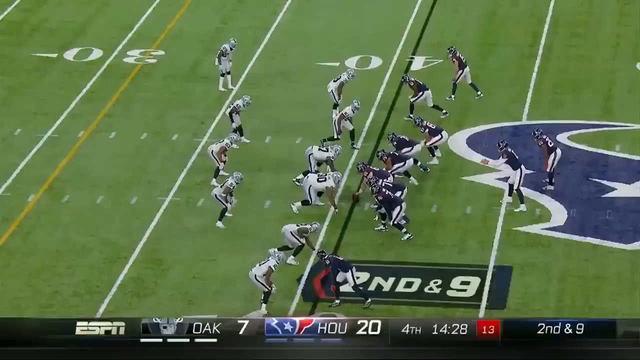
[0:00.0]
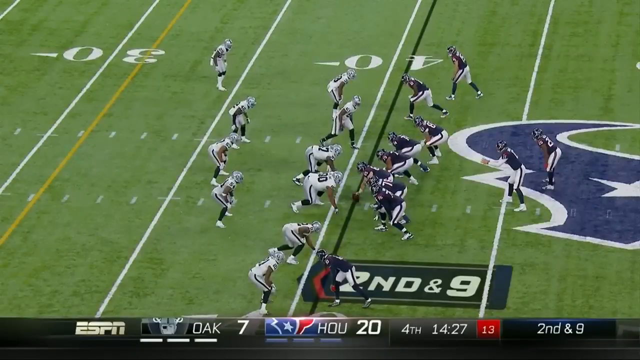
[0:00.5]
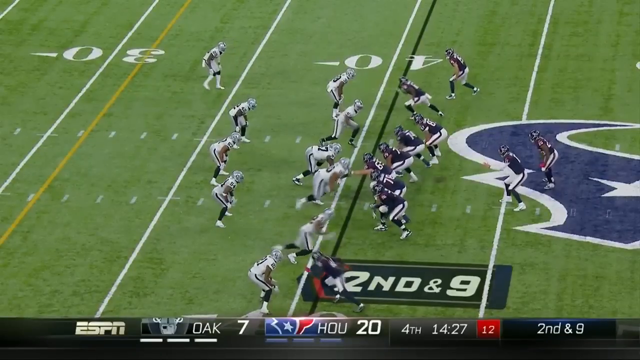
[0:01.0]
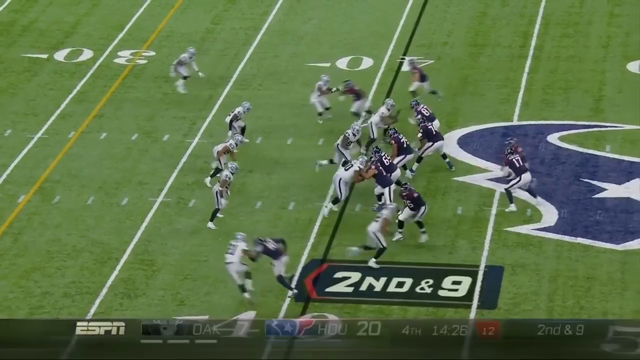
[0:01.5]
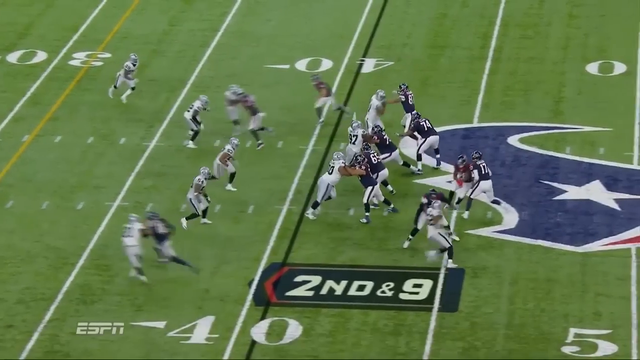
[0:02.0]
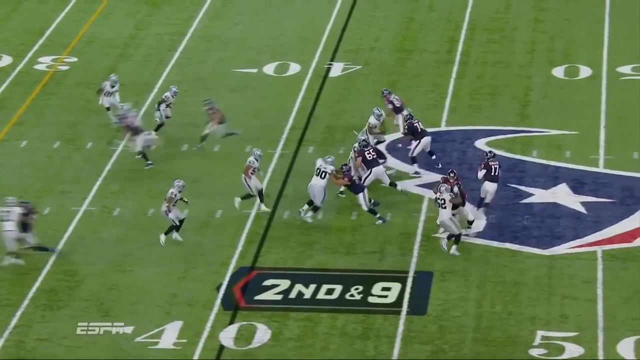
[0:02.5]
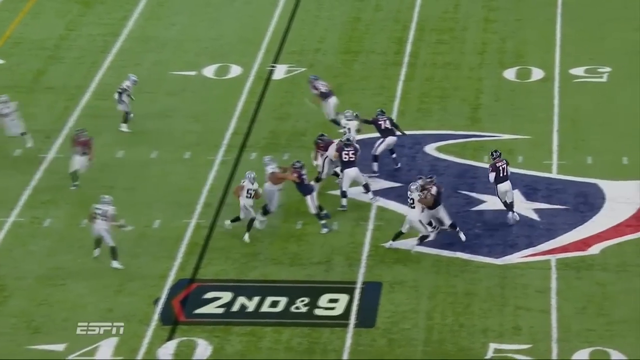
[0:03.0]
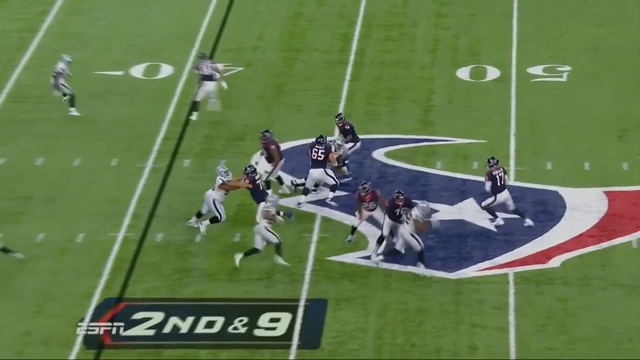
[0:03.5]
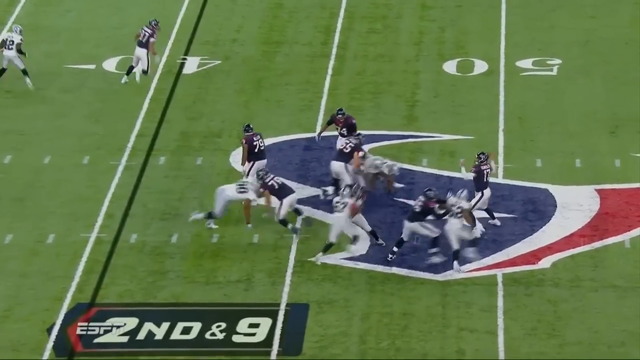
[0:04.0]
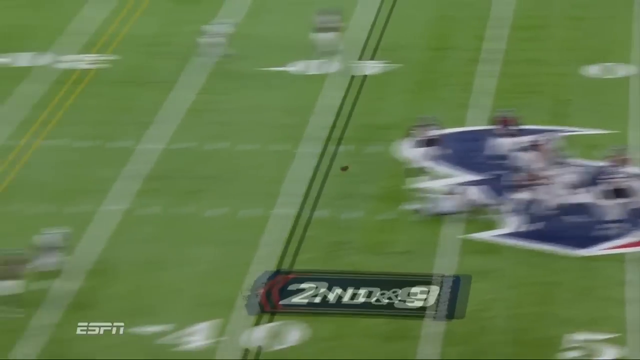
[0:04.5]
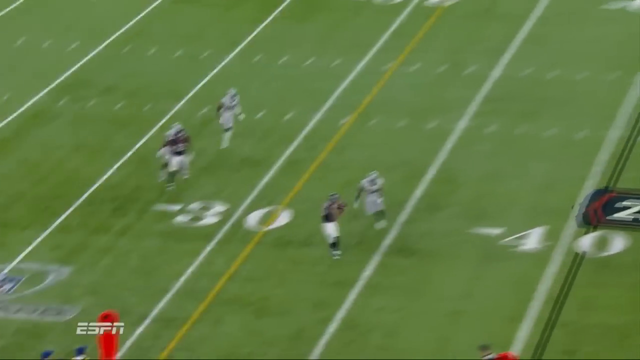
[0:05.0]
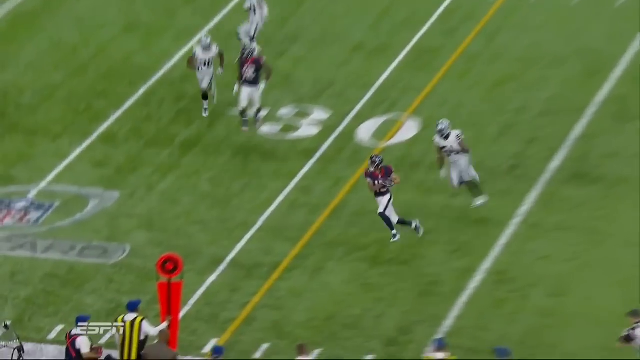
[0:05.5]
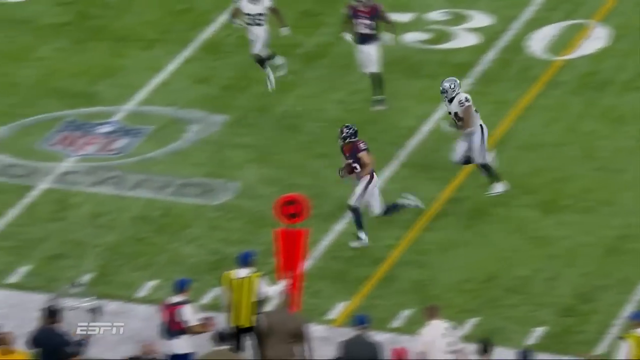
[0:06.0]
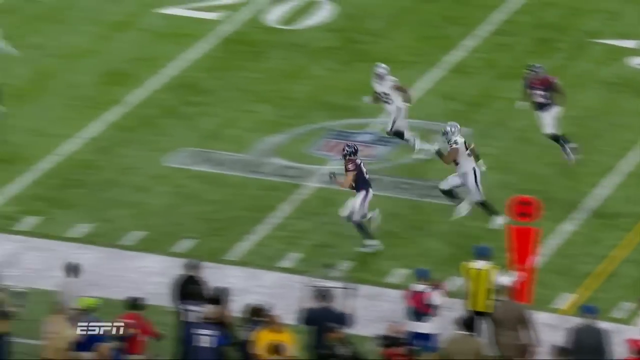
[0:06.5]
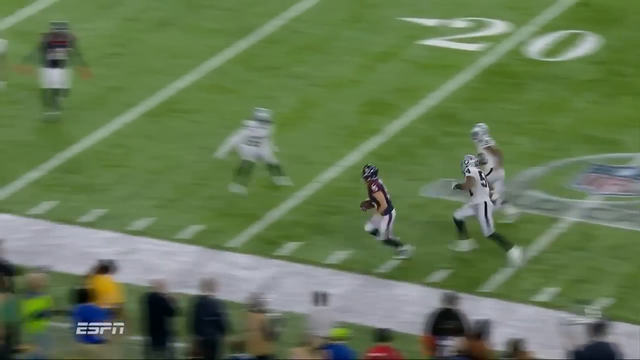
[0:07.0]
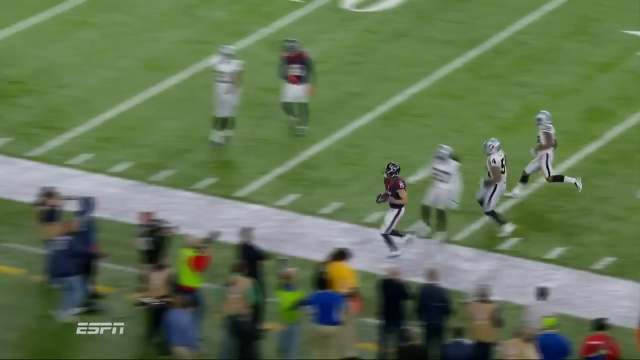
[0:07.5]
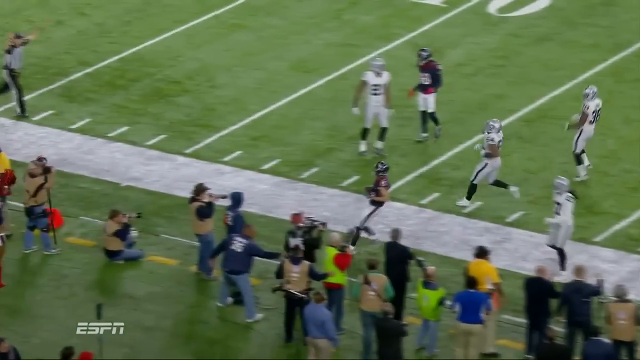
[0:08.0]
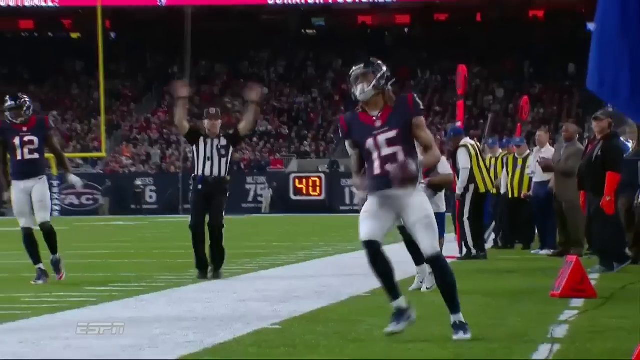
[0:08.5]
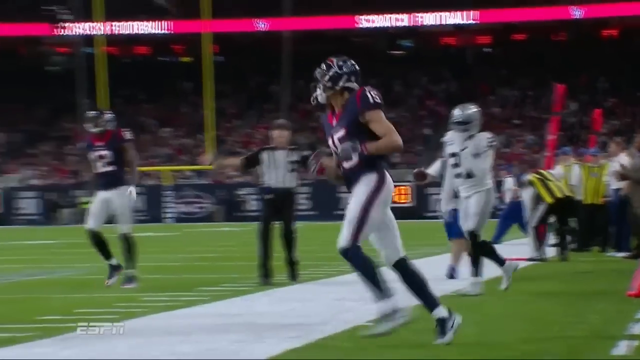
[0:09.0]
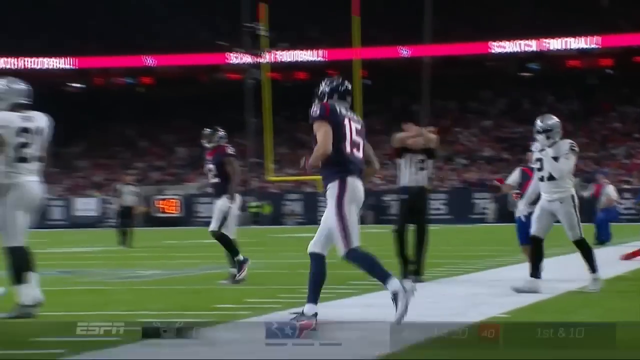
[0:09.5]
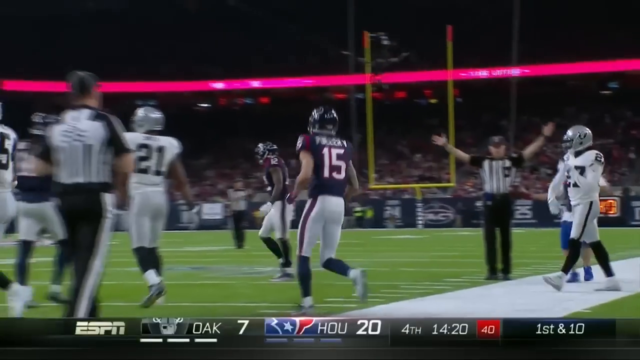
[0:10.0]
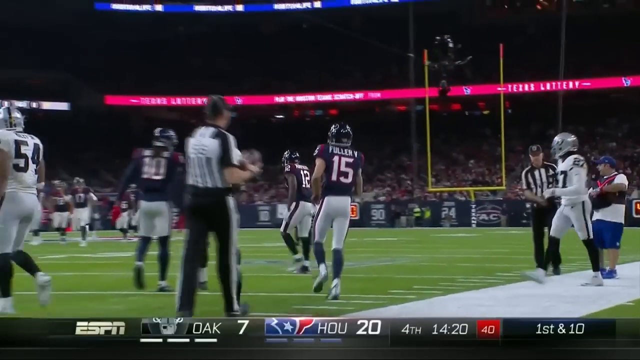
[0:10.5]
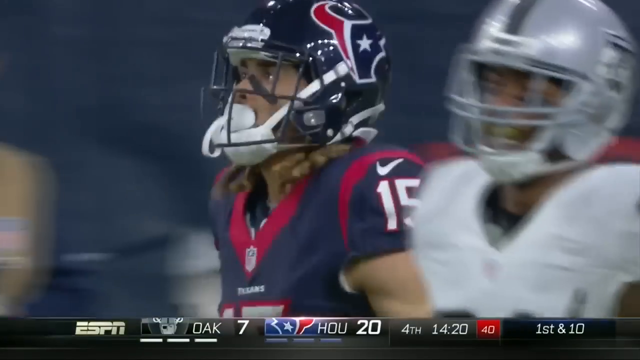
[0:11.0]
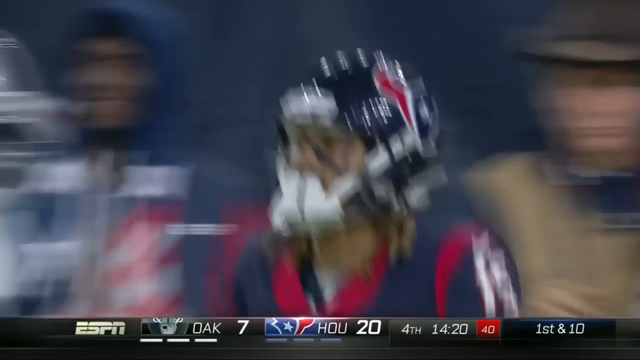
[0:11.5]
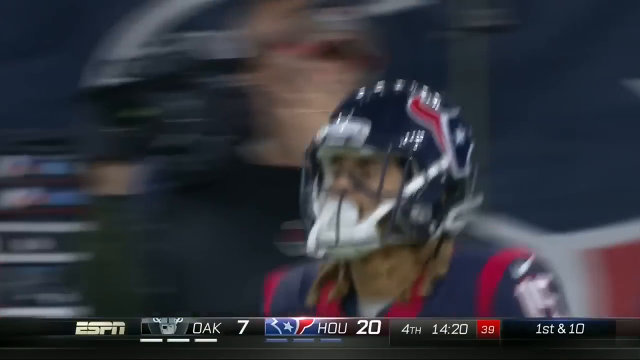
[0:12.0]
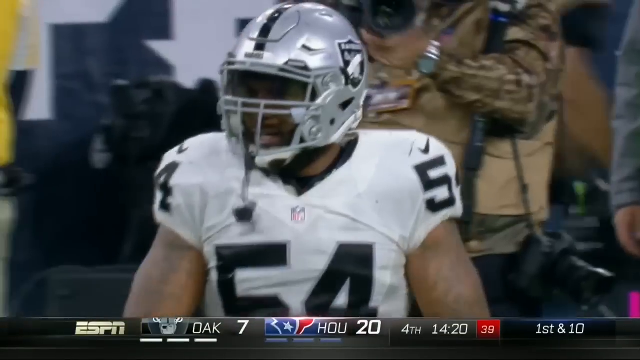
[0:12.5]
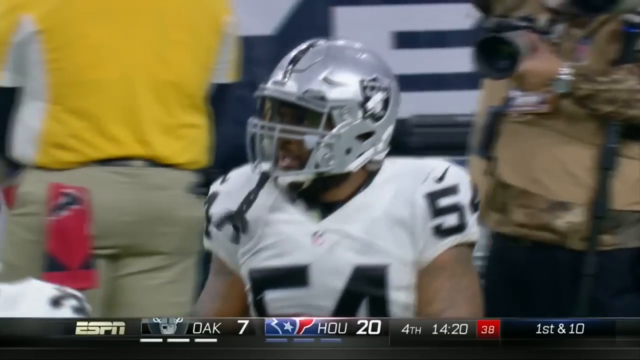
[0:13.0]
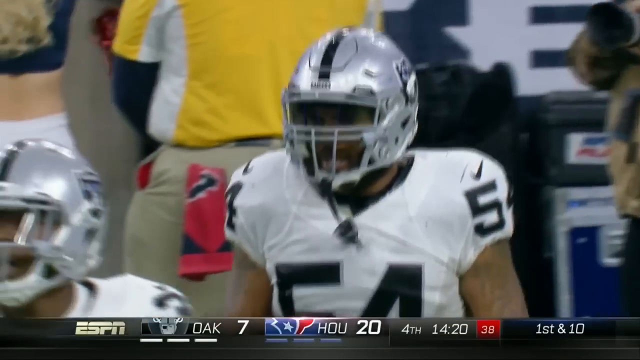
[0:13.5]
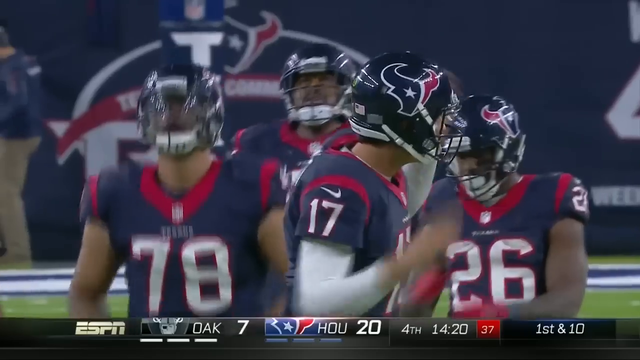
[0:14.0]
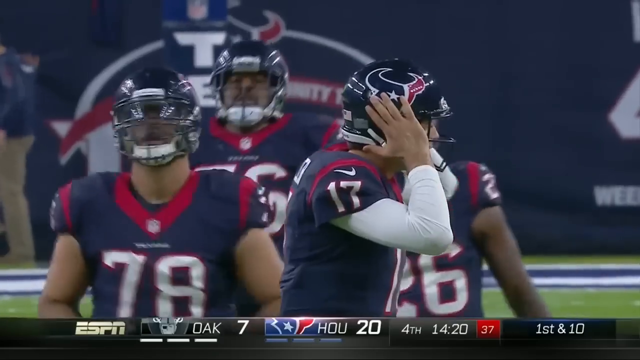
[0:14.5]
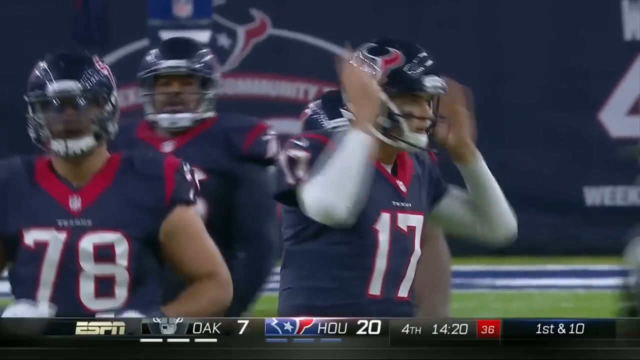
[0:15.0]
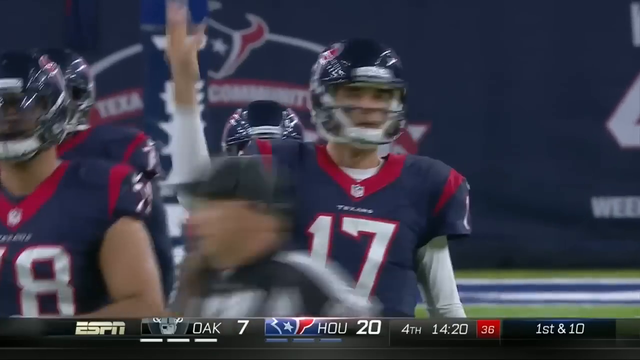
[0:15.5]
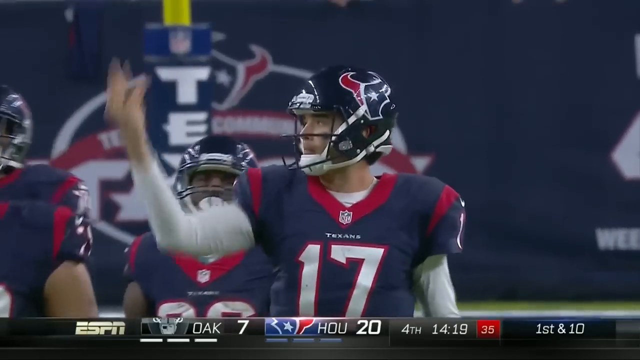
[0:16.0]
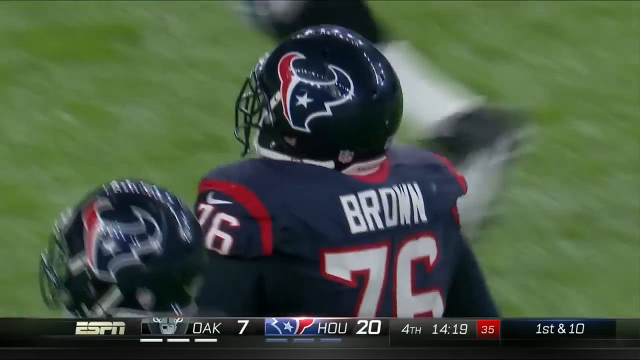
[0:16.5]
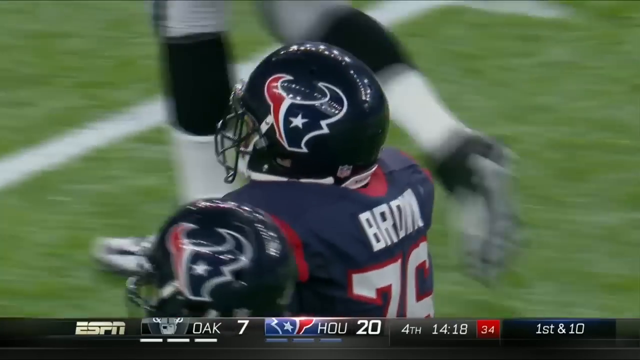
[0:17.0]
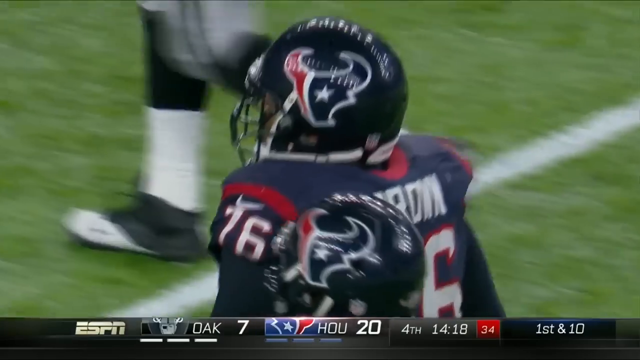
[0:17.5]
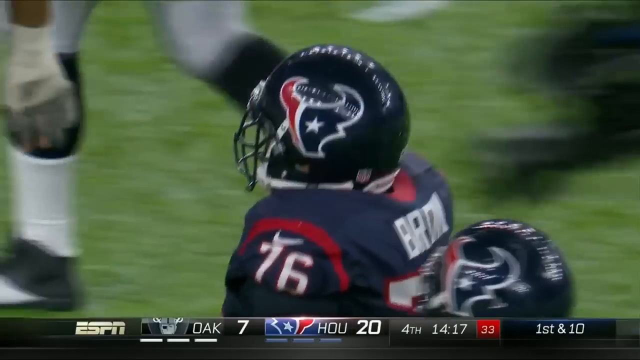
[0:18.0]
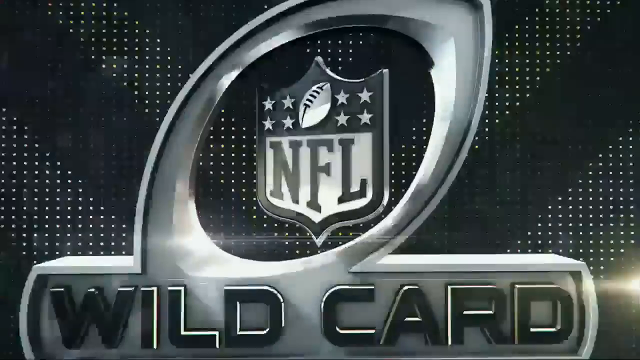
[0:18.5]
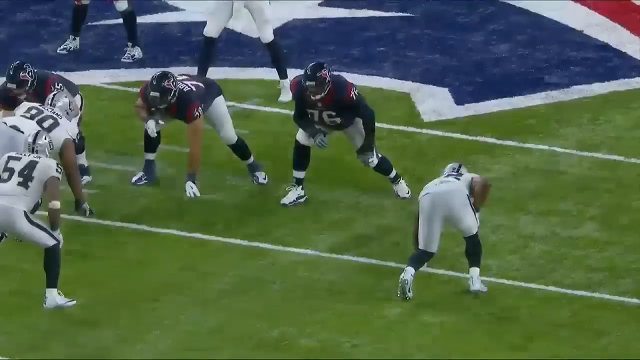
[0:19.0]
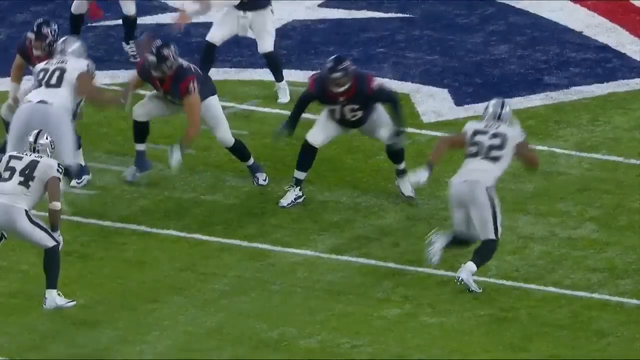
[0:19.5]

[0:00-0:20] Two rugby teams play against each other on a pitch marked green and white. One team wears purple, dark blue with red lines; the other team wears white with black stockings. Both teams wear helmets, and they fight for the ball in different directions. Each team has a flag on the pitch. A referee wearing a black and white striped shirt raises his hands. Numbers are written on the pitch, 50, 40, 30, as the teams race against each other for the ball. There are also white markings on the ground. In the background, many spectators watch the game and cheer for their teams, and there are also people in the pitch watching the game.